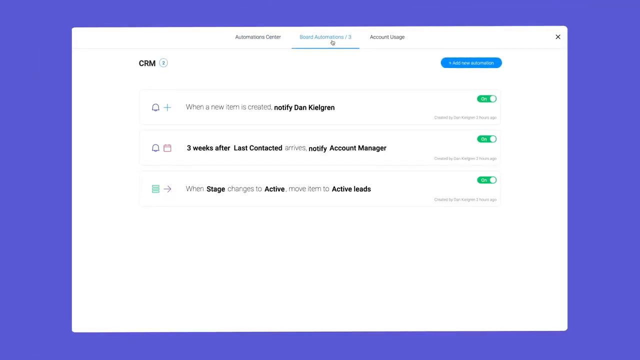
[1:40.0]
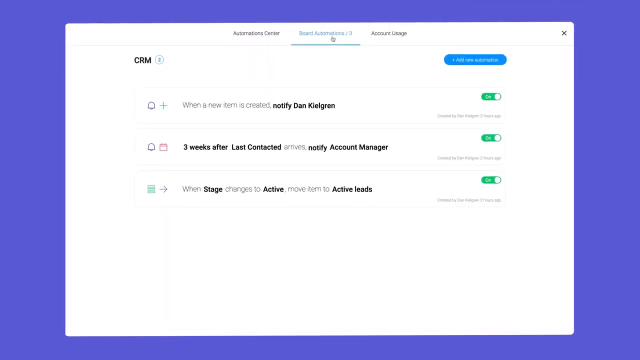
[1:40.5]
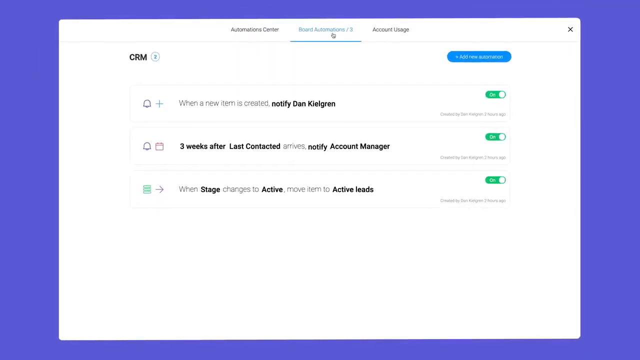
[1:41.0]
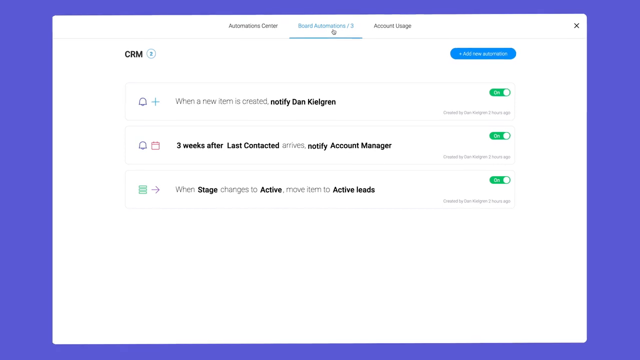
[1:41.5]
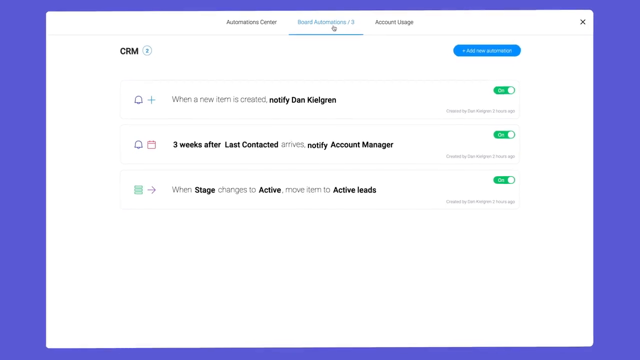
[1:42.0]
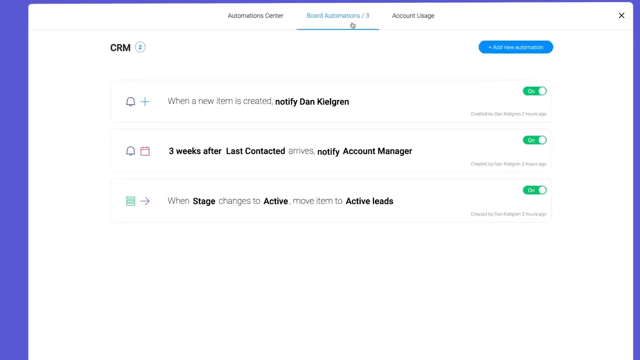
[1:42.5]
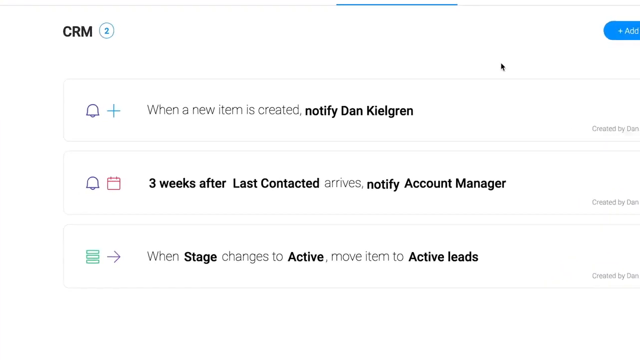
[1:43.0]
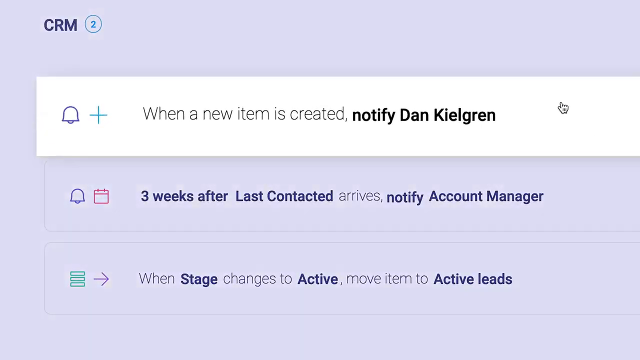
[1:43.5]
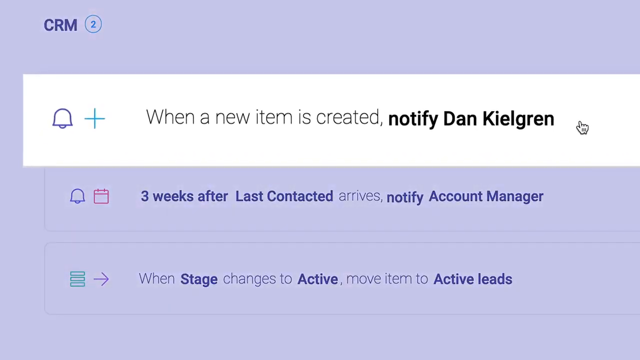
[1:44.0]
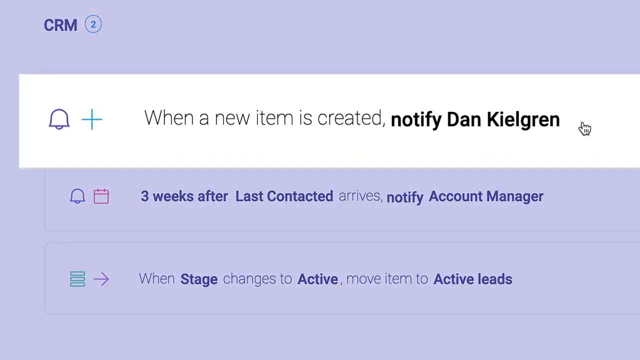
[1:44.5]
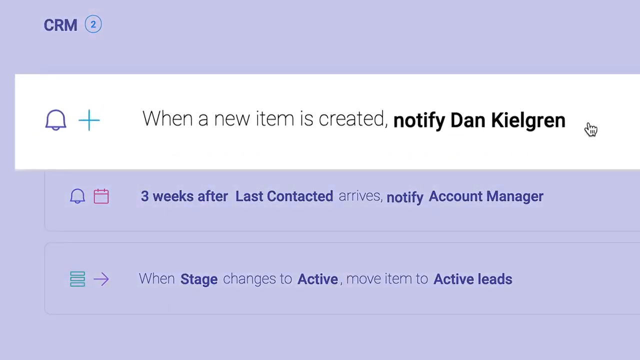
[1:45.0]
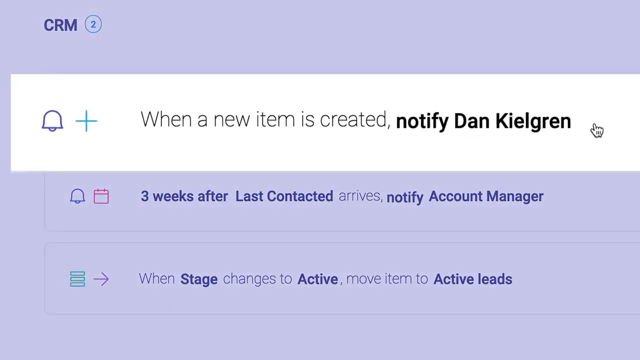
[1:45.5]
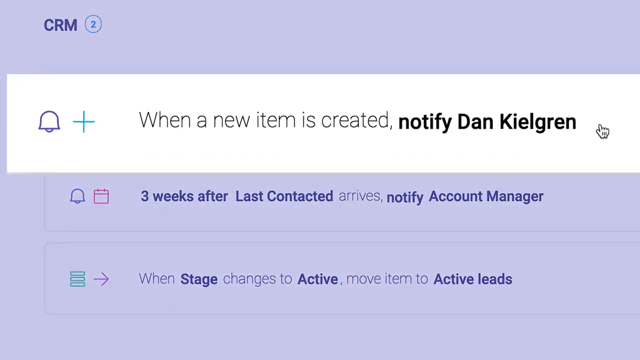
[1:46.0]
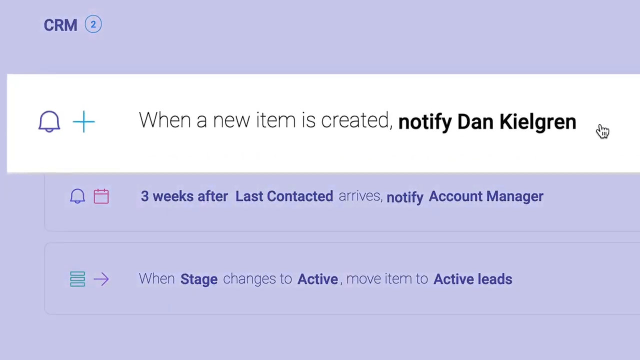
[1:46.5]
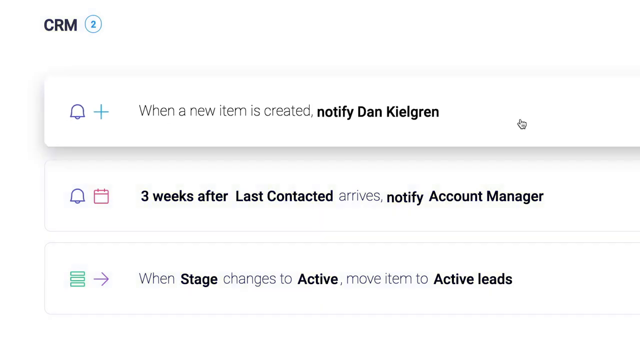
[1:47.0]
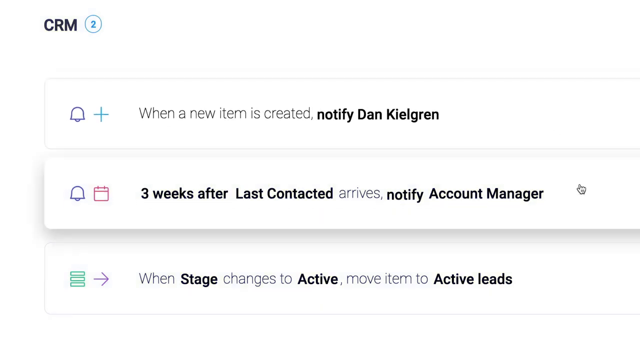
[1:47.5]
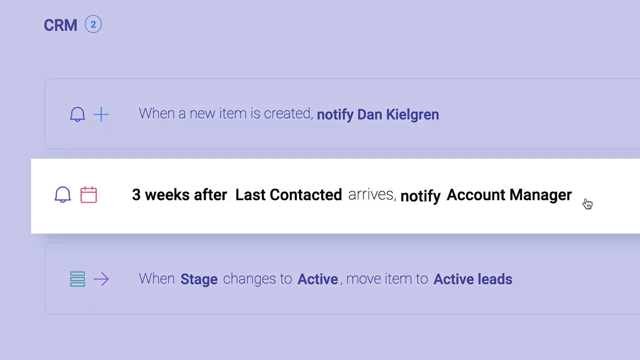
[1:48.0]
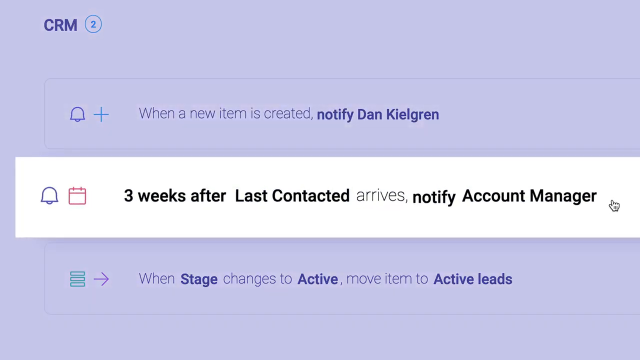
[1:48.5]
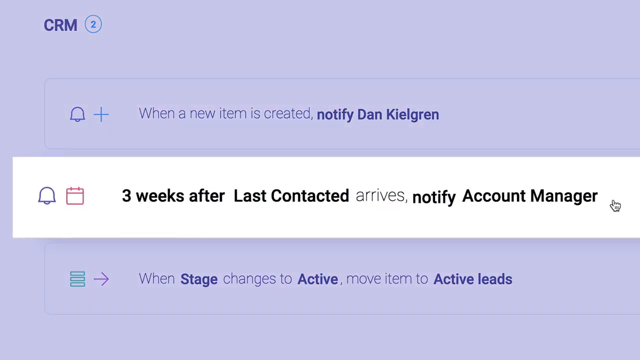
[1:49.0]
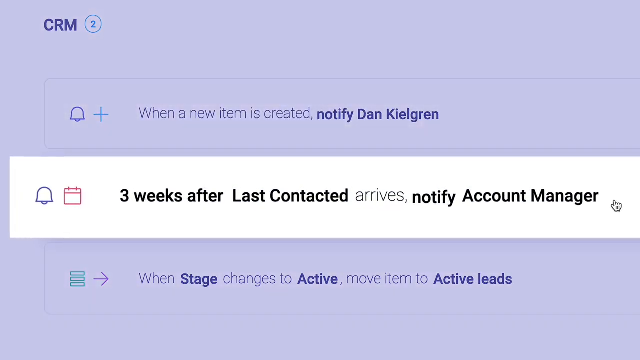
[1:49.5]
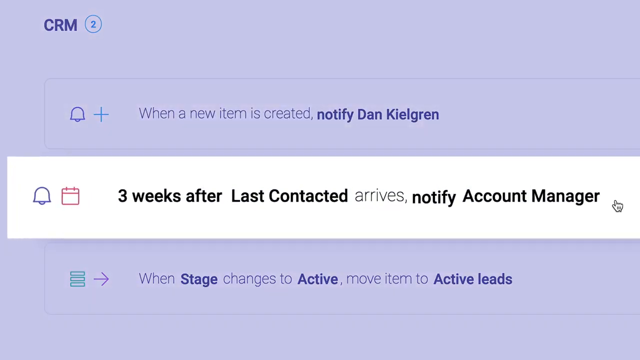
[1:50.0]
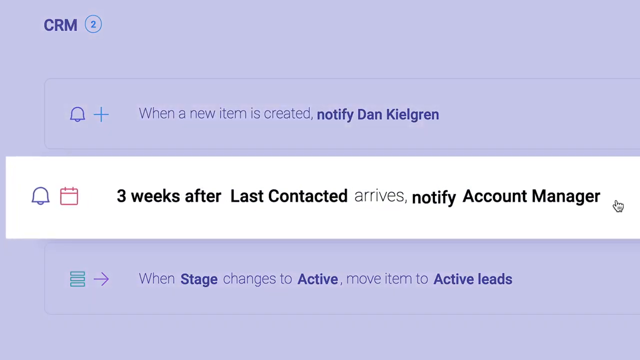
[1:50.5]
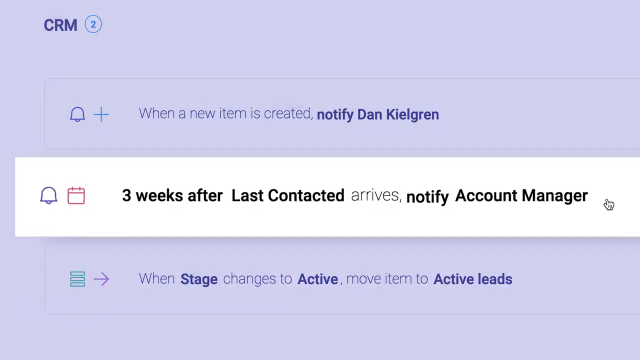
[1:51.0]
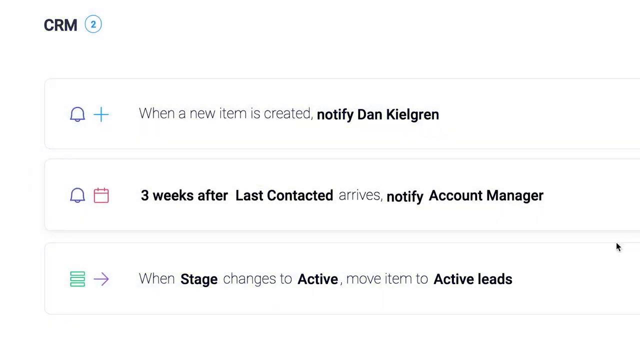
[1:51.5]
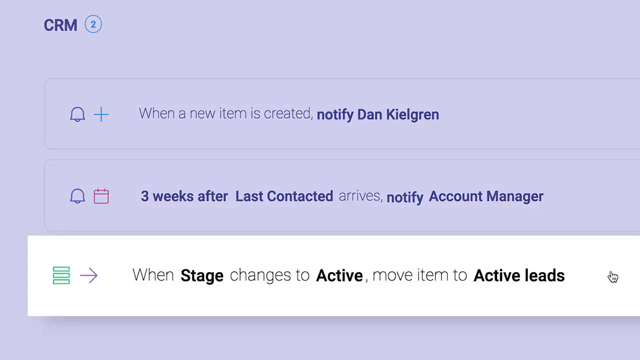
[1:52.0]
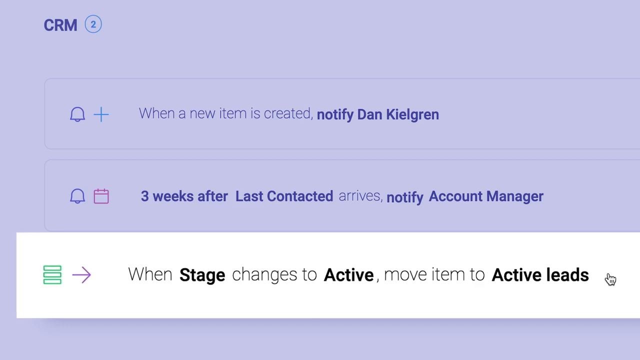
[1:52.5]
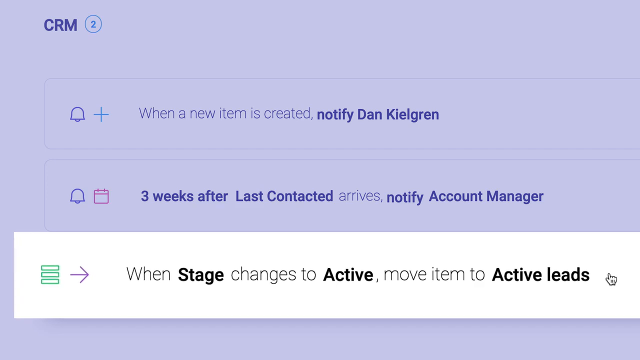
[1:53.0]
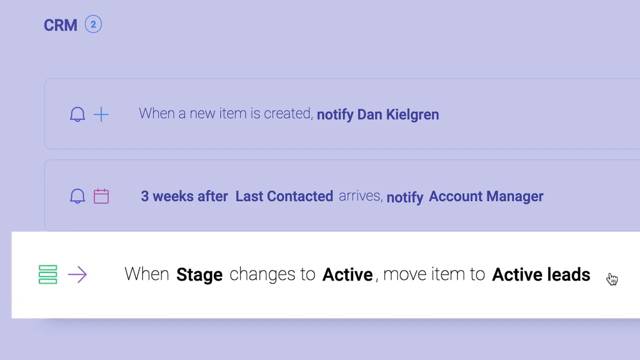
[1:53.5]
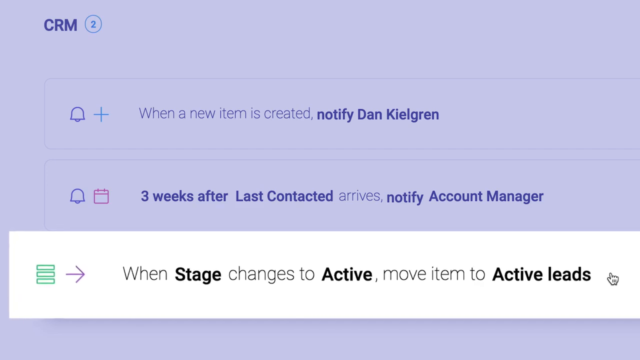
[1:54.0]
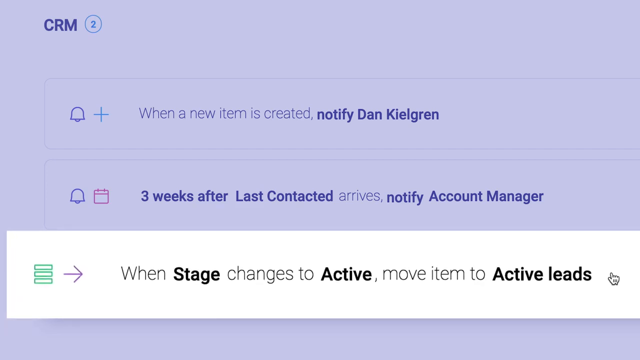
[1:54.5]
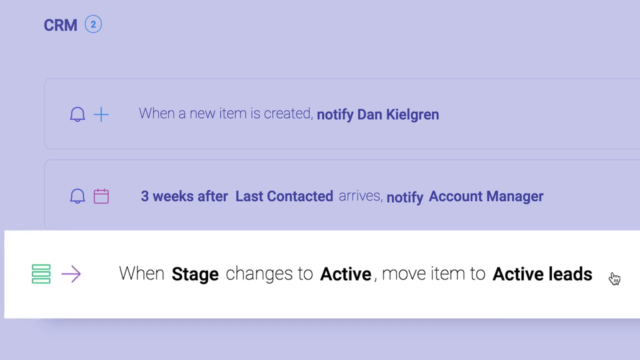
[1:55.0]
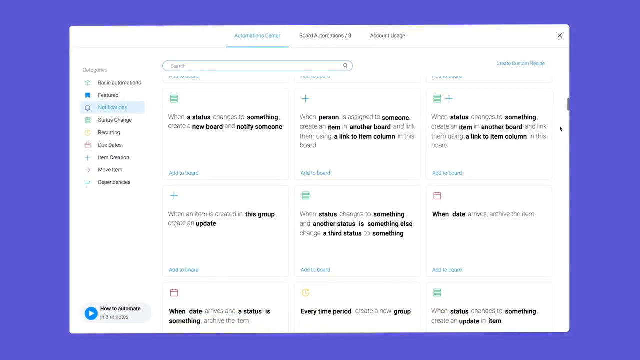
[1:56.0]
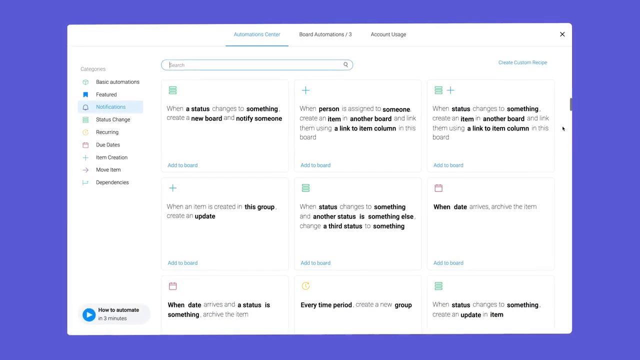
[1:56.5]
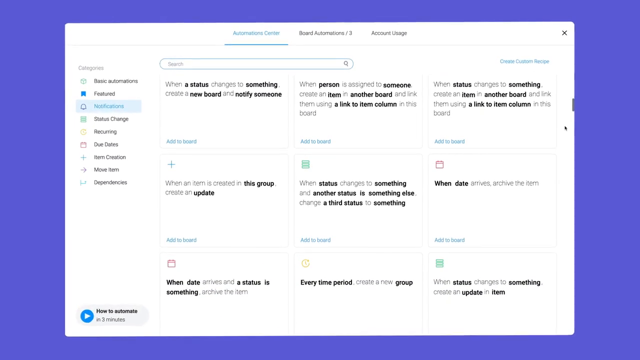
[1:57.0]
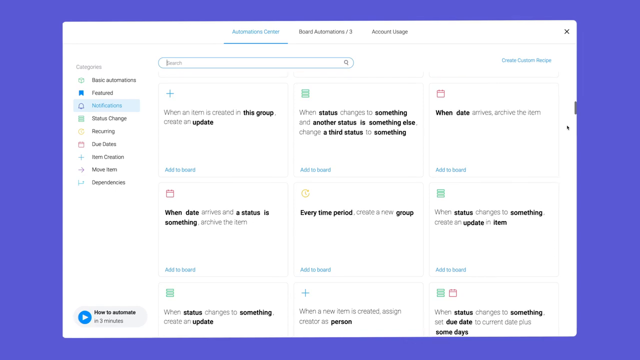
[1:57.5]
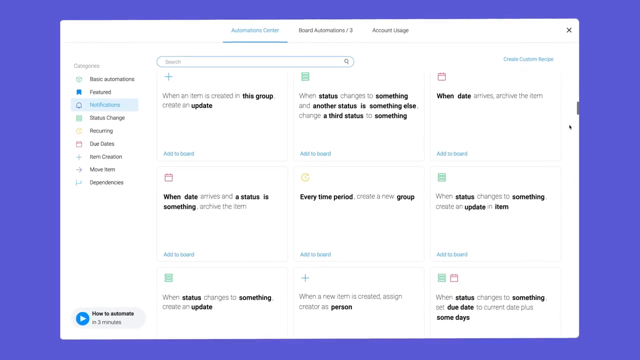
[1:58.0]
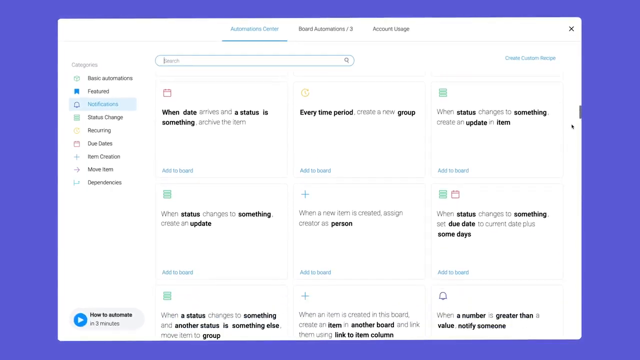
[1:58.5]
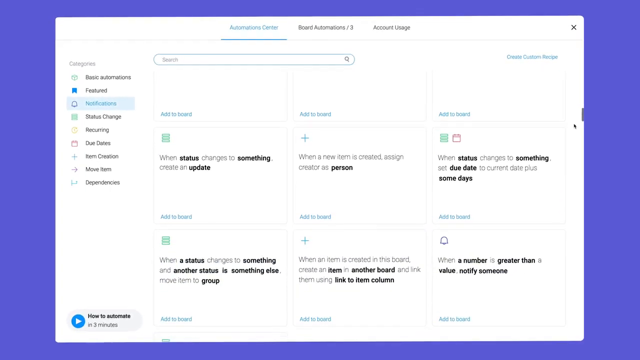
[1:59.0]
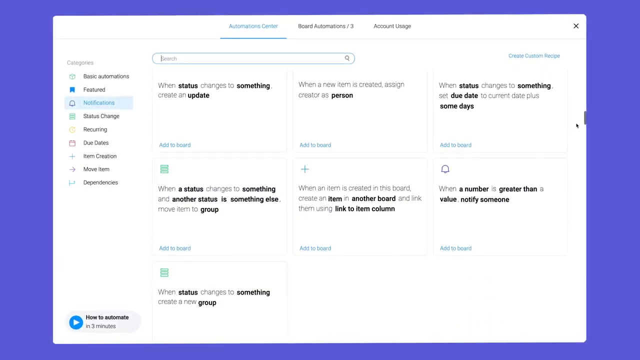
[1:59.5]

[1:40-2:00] The page with CRM on it is shown. The cursor clicks on a box reading "when a new item is created. Notify Dan Kilgren," with a plus sign and a bell. The next pop-up box says "three weeks after last contacted arrives. Notify account manager," with a bell and a calendar icon to the left of the words. The cursor then pulls up a third box that says "when stage changes to active, move item to active leads." On the left side of this rectangular shape there are three green settings bars, and an arrow points to the right toward the words. Next, a different page of the program scrolls up from the bottom; various things are visible, but the words cannot really be made out.